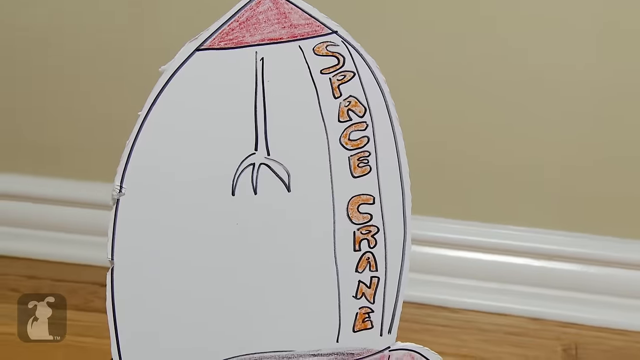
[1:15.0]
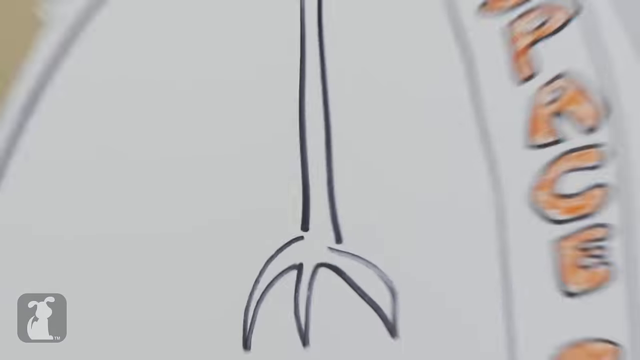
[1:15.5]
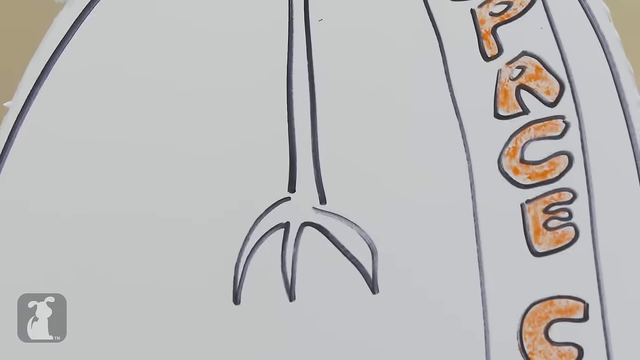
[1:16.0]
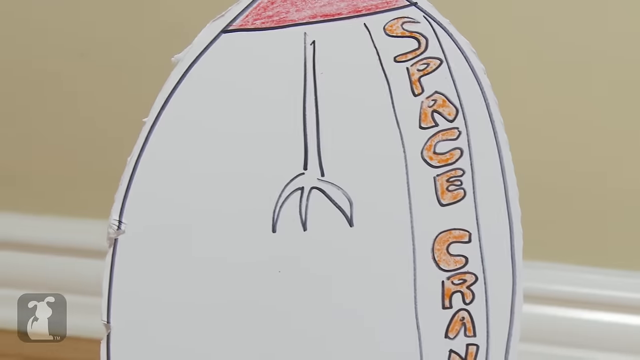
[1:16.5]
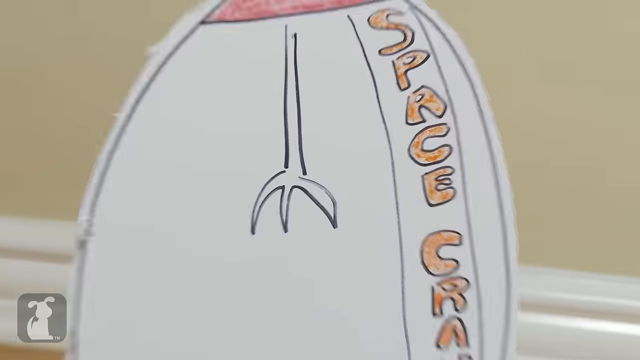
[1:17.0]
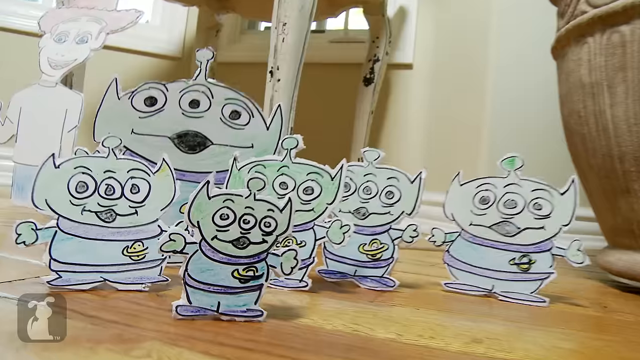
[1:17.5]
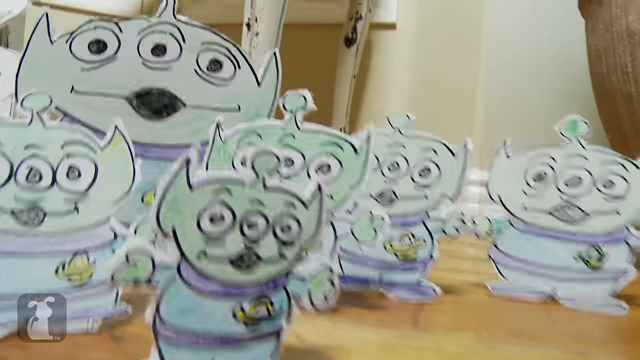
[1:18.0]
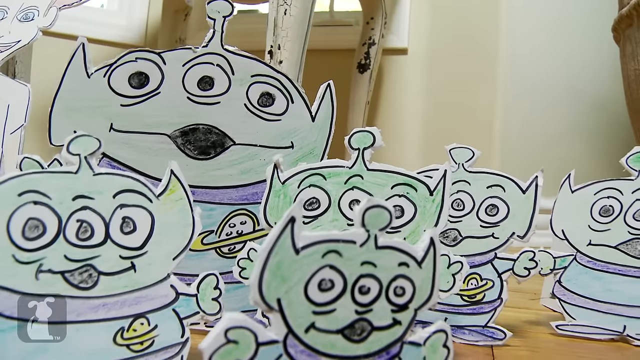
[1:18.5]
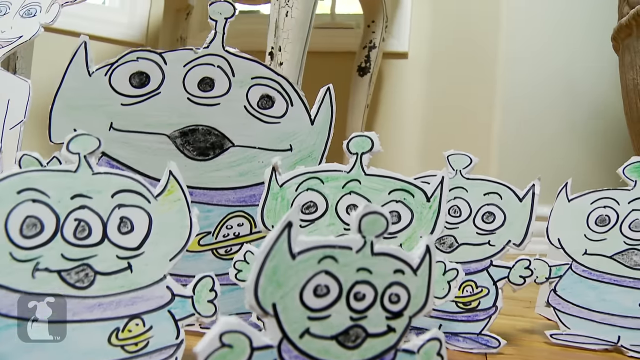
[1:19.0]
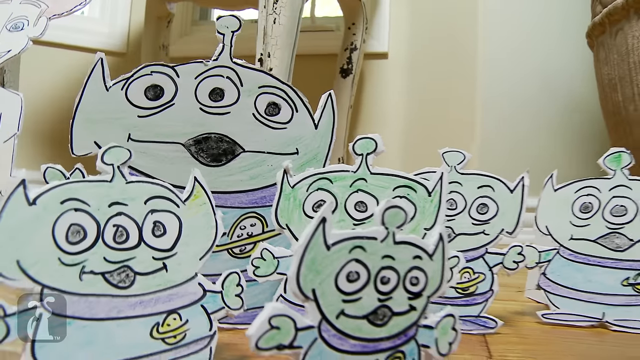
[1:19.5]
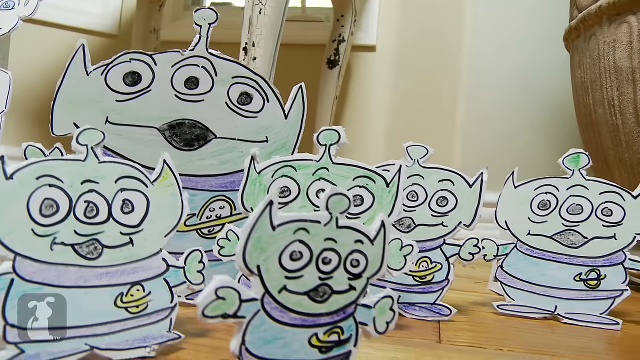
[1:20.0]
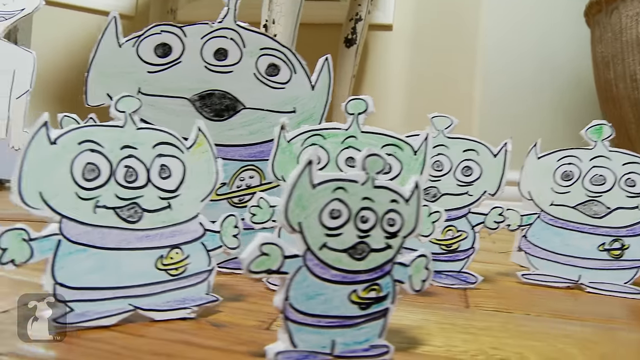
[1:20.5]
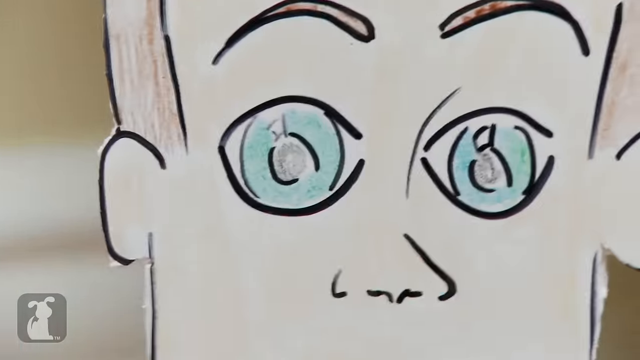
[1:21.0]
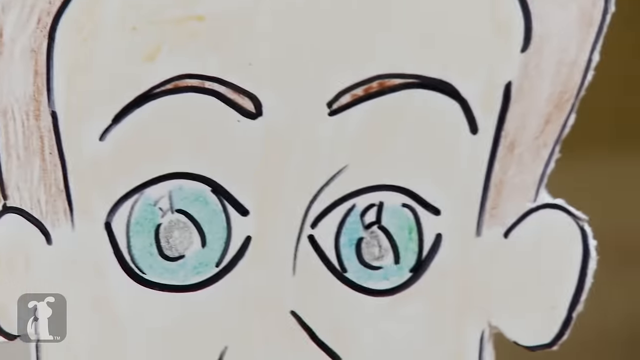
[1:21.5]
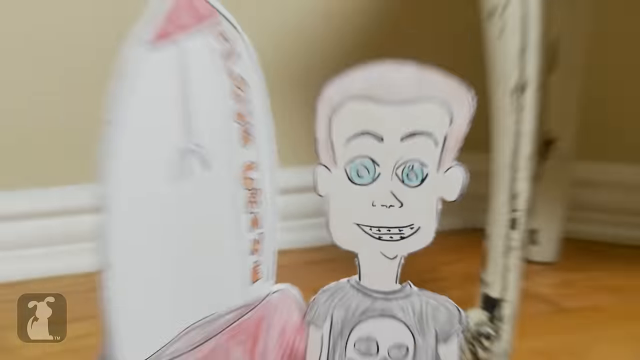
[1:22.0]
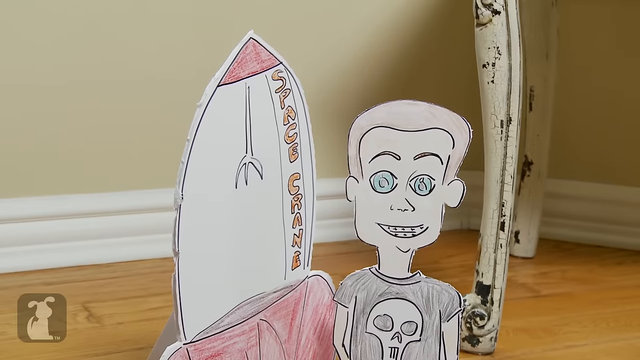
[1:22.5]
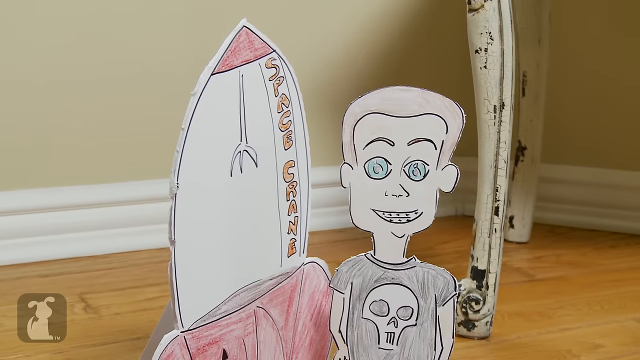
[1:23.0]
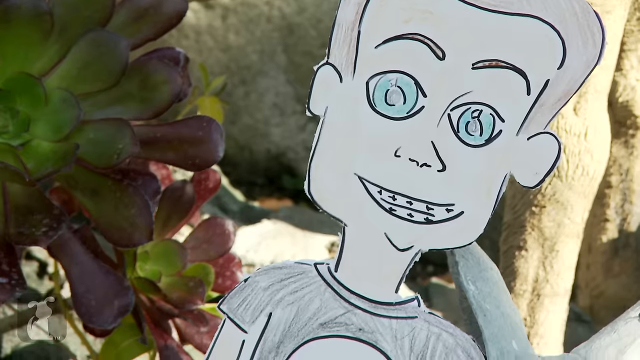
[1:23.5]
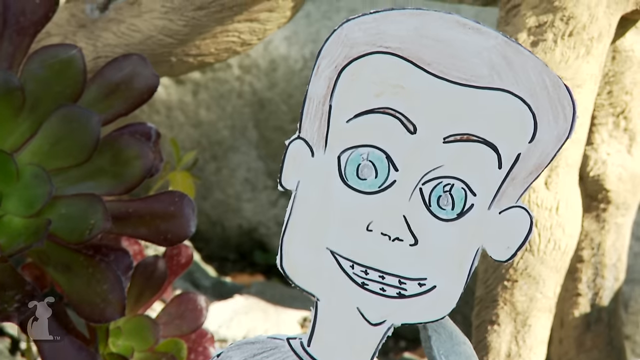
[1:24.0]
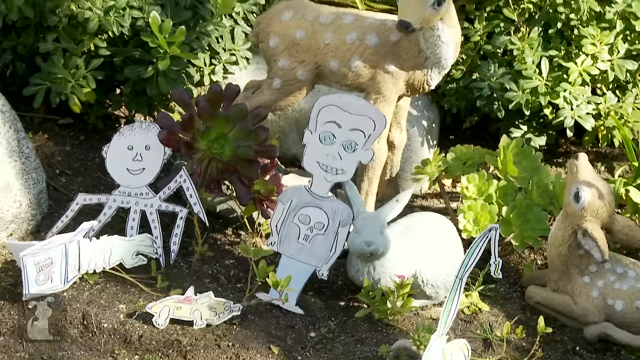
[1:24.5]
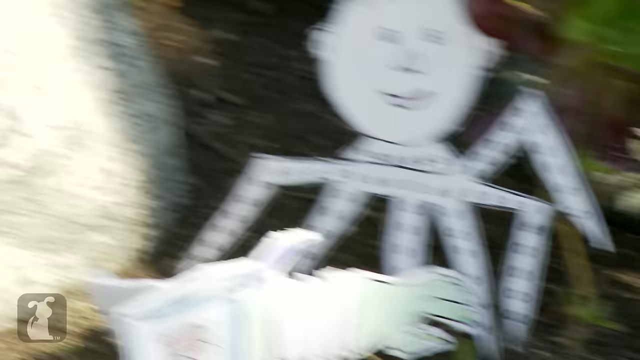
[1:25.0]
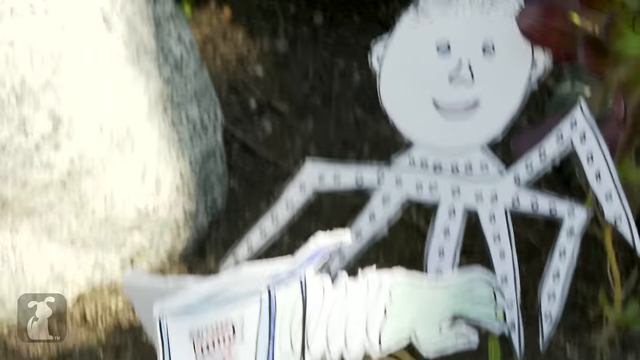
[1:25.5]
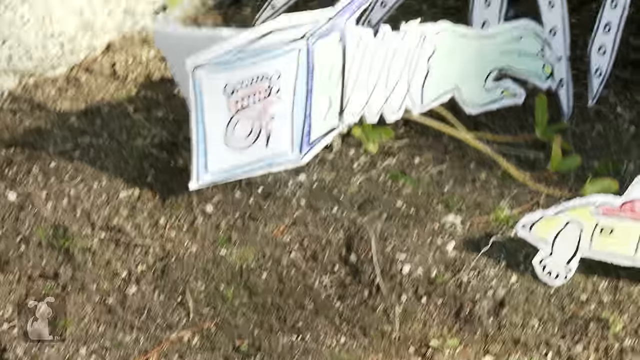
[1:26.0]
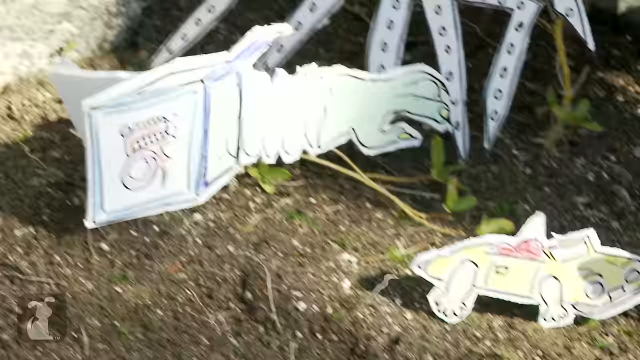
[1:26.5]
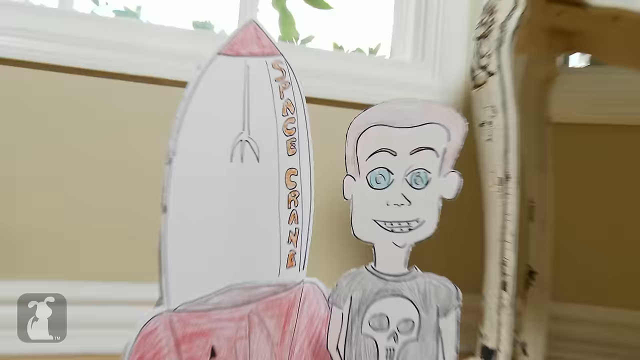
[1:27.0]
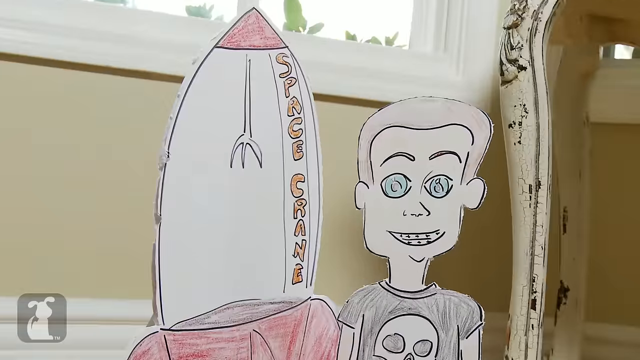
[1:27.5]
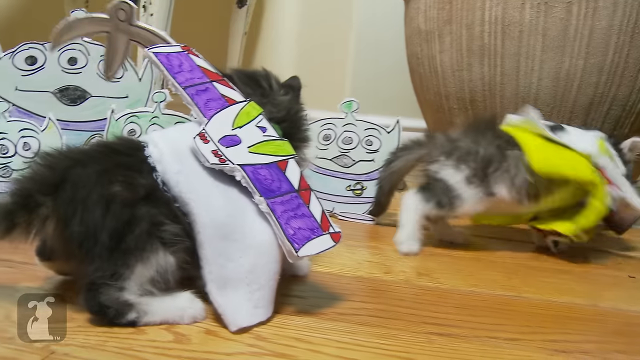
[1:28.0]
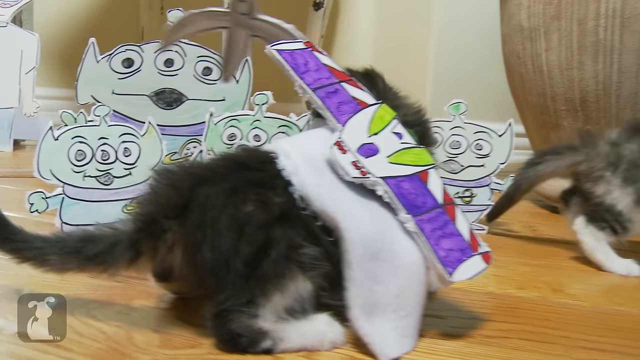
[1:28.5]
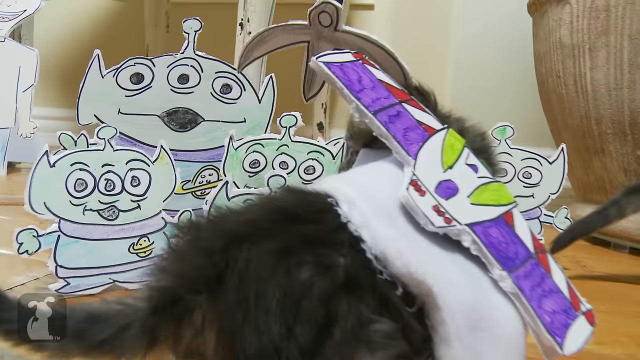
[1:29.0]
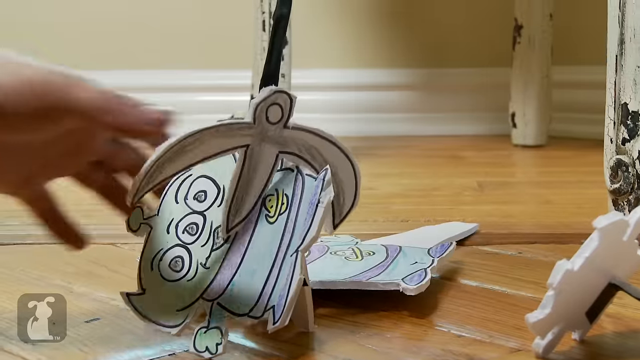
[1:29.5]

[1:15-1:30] Some cardboard aliens appear to have crash-landed from out of space onto the toy world scene. Numerous cardboard aliens all look very happy and wave their little green arms. At one point one of the kittens tries to sniff one, then jumps back when it falls over. A hand crane operated by someone out of sight of the camera attempts to pick up one of the aliens, perhaps as a form of alien abduction, but it is not very successful because the alien is only made of cardboard.